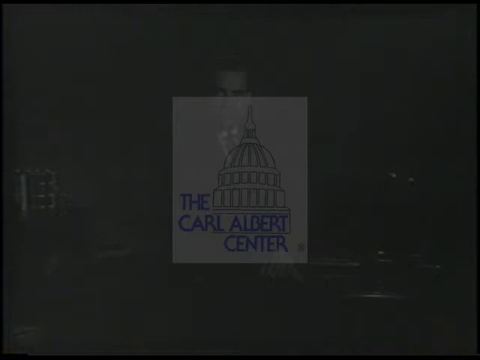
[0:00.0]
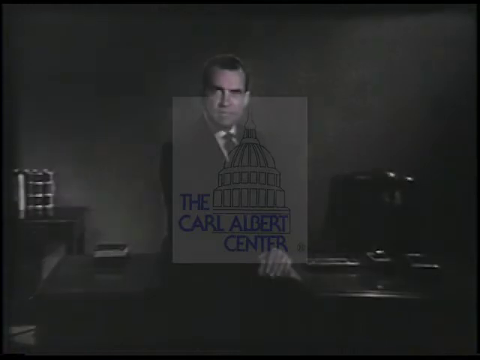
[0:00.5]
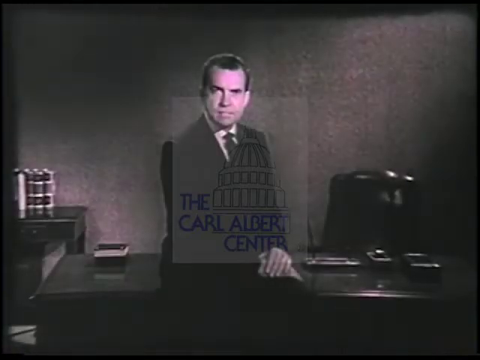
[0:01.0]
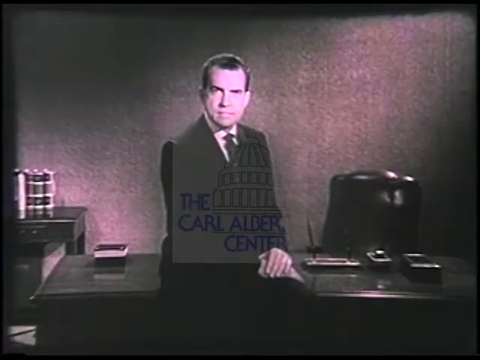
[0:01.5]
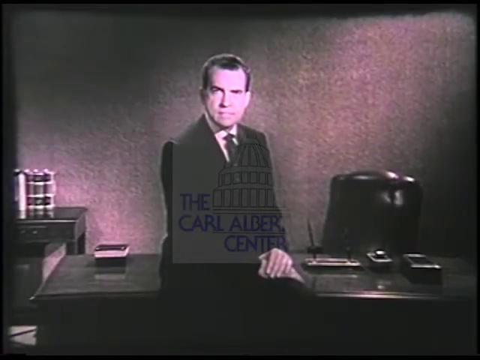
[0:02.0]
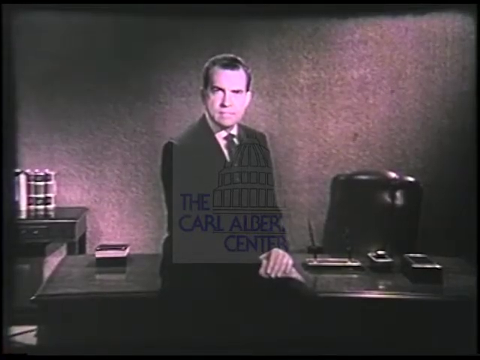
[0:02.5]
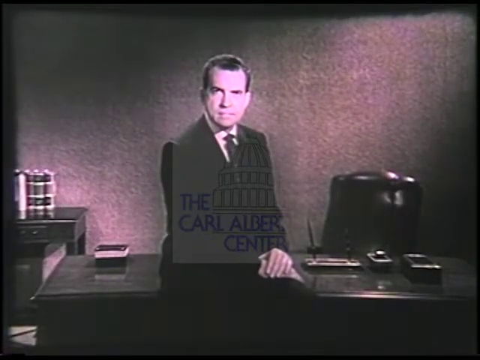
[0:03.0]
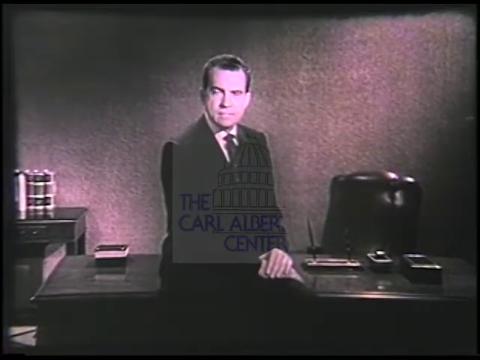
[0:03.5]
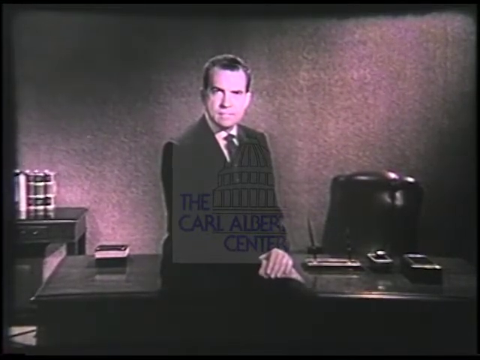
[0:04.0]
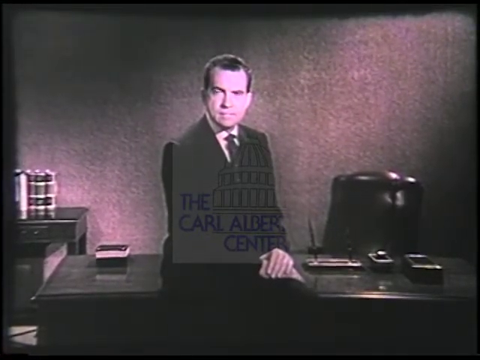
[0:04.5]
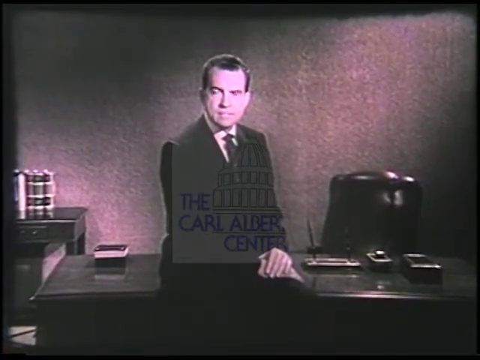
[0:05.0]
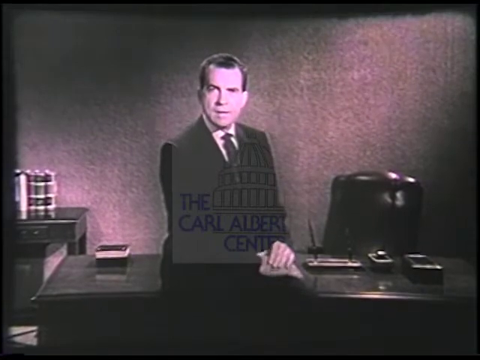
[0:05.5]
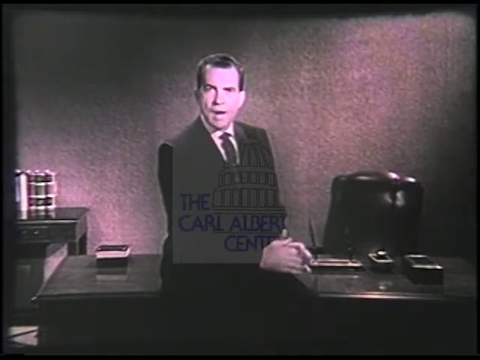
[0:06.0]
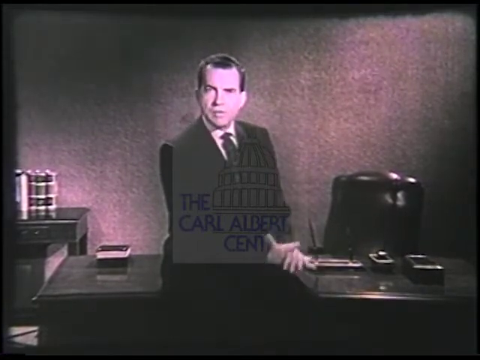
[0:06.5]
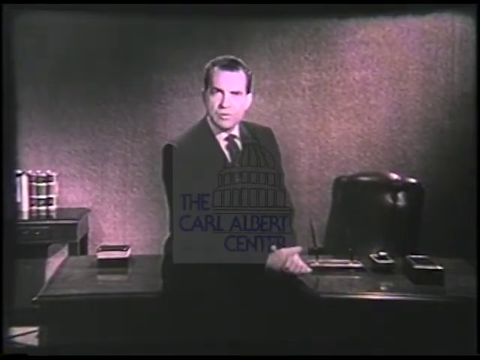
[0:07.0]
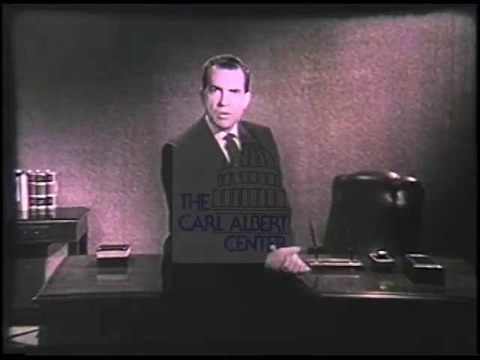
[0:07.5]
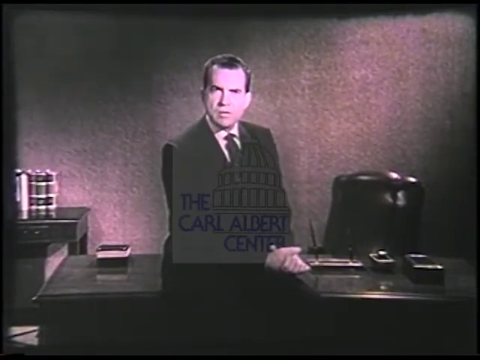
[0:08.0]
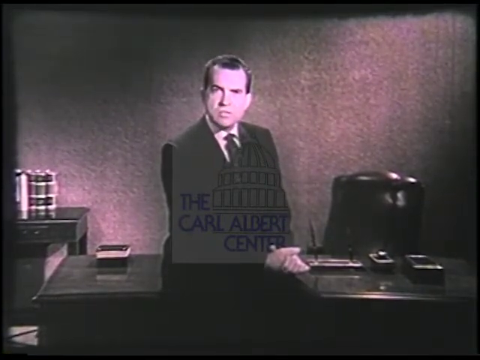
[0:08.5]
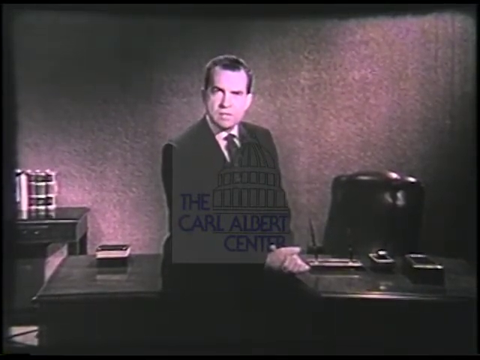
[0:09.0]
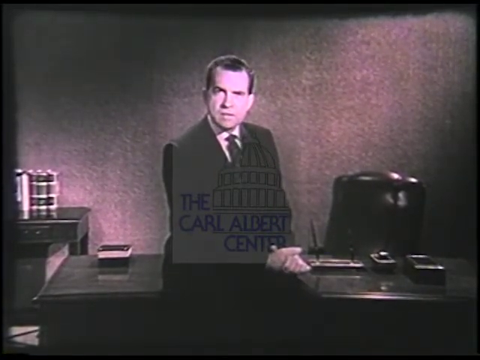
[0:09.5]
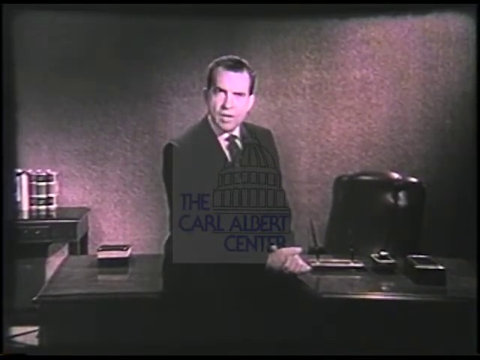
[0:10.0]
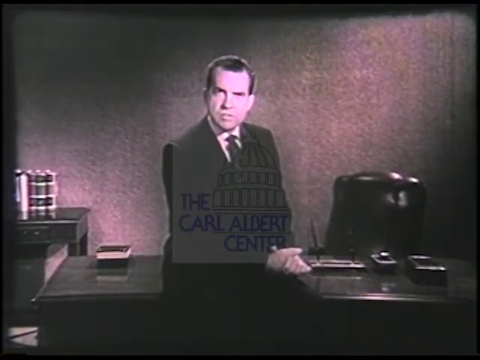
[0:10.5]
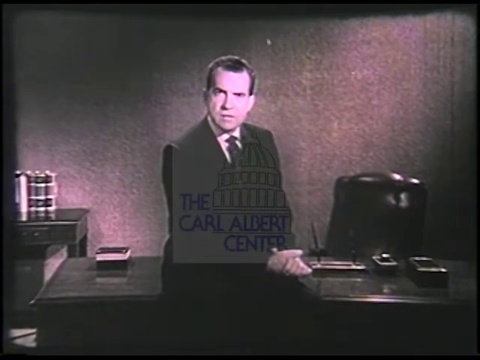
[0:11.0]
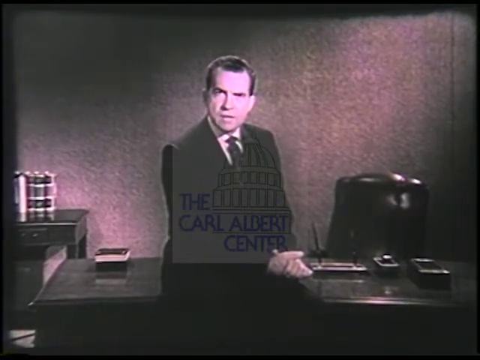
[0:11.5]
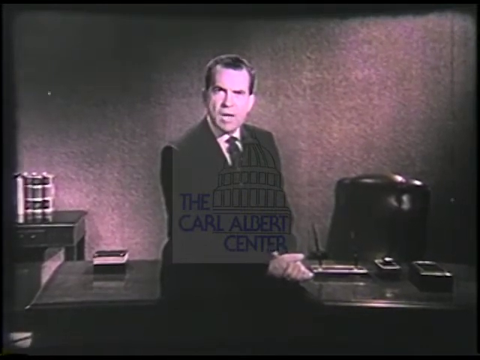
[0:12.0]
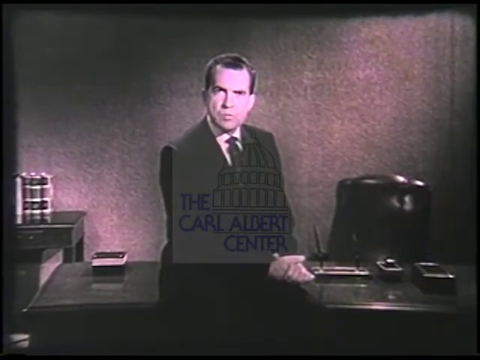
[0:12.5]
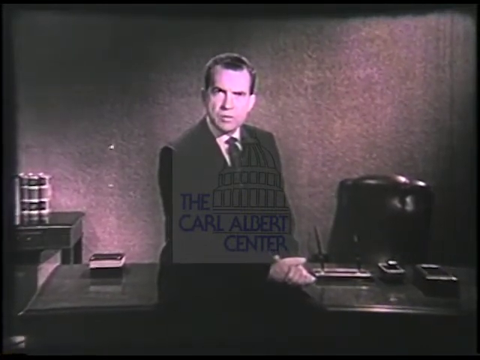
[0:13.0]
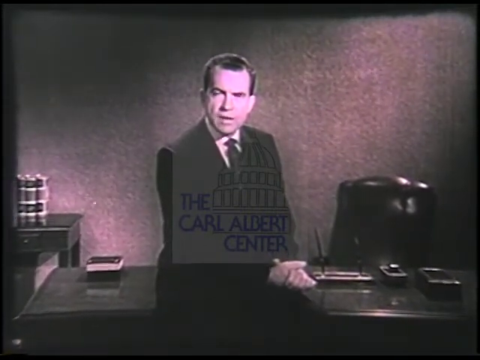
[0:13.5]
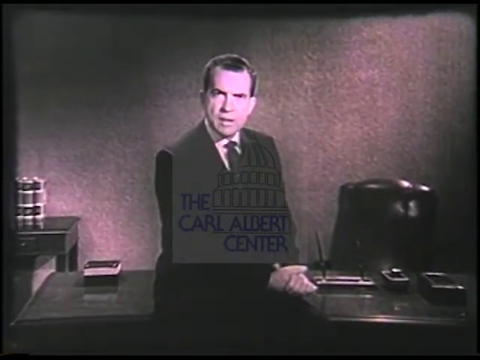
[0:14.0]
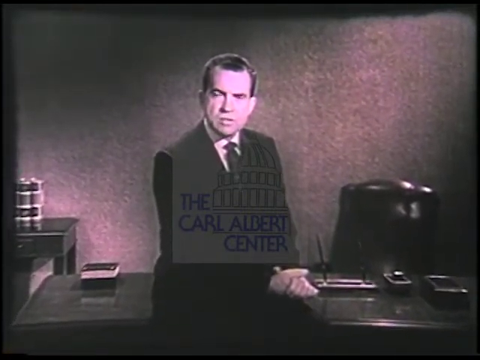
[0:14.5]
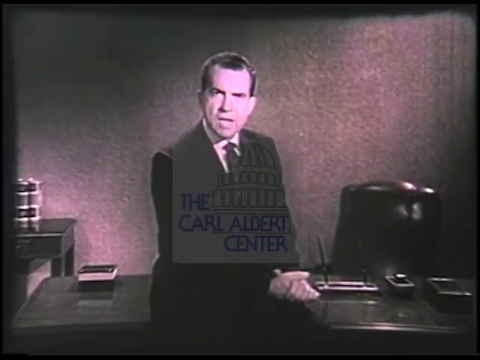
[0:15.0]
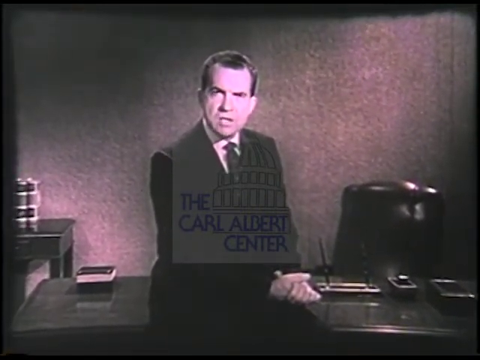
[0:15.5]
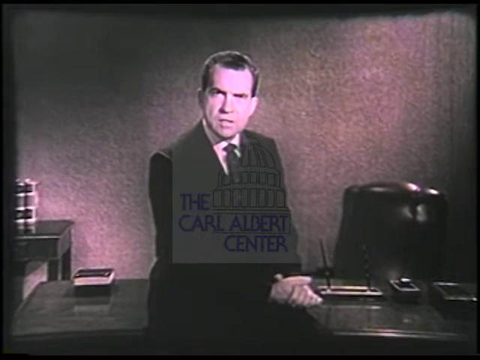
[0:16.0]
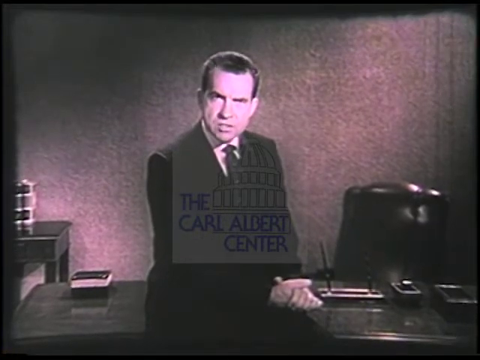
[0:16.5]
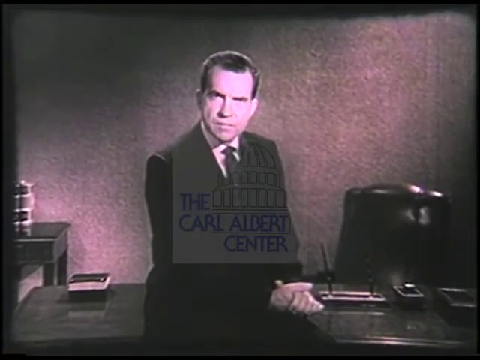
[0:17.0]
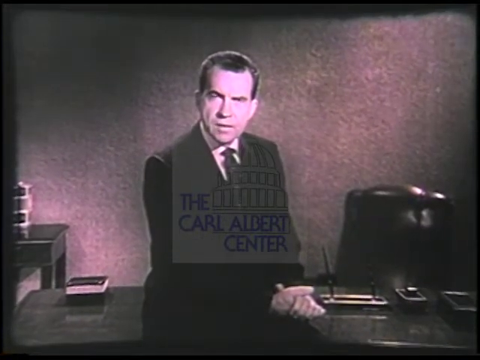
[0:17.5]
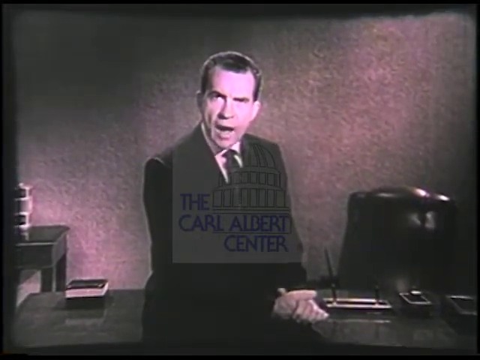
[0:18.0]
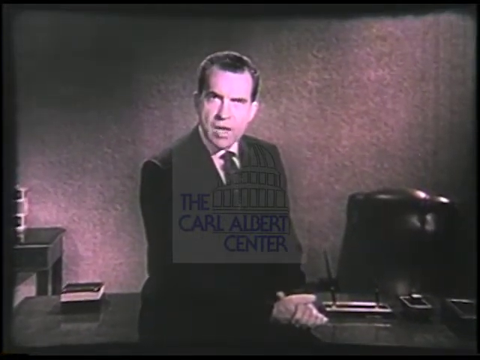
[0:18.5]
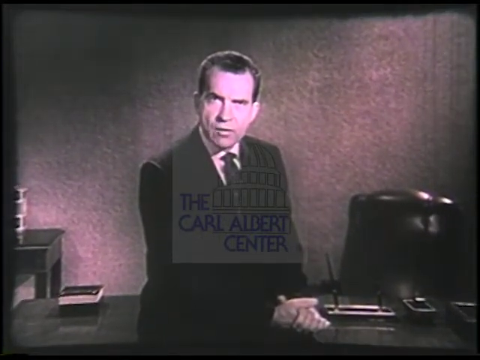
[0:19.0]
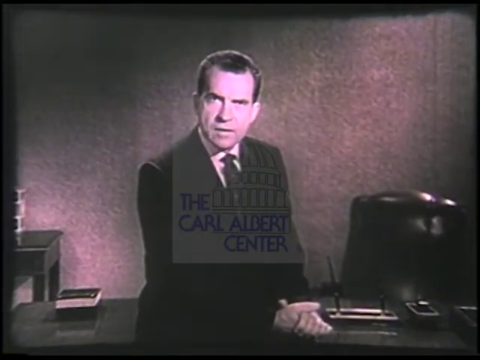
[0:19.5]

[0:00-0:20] The video shows the Carl Albert Center. In black and white, a man who looks like Richard Nixon is sitting on a big desk with his hands folded, looking straight into the camera and talking, stressing his wording as he speaks. He does not seem to be in the Oval Office. Behind the desk is a chair that looks comfortable. There are only a few things on the desk, and books are visible over to the left-hand side. As he continues to talk, the camera slowly fades in.